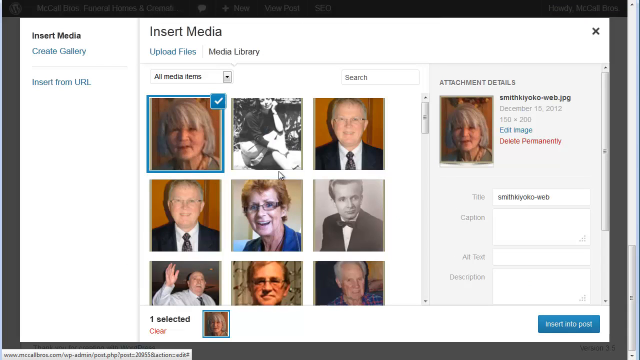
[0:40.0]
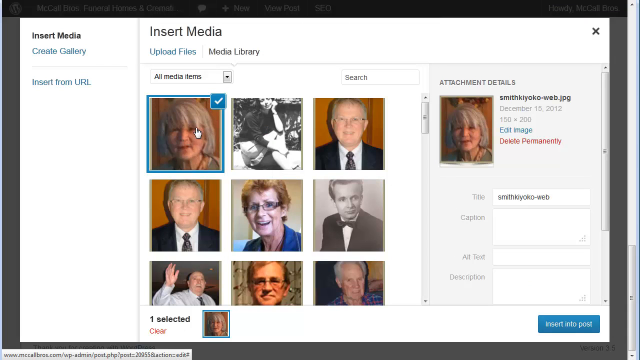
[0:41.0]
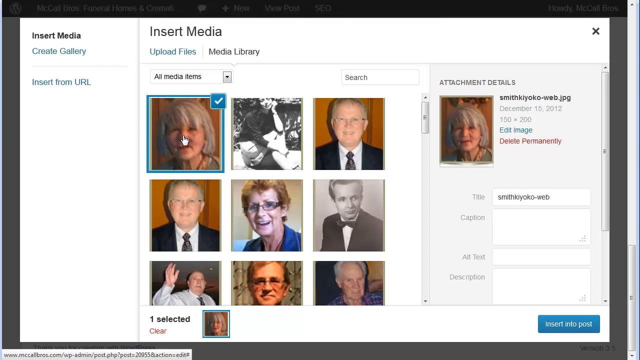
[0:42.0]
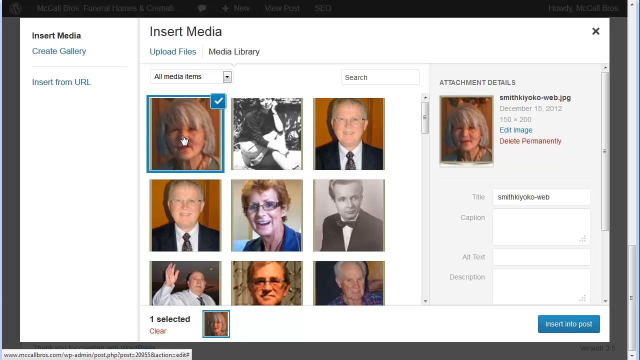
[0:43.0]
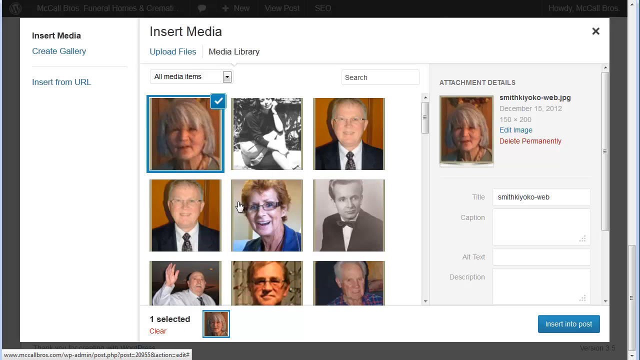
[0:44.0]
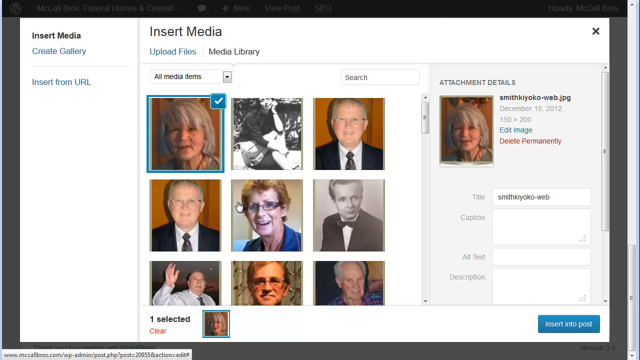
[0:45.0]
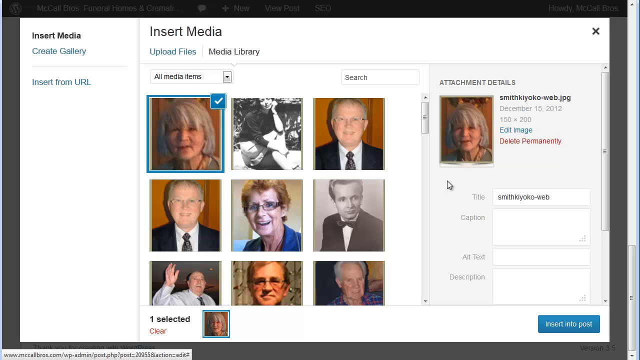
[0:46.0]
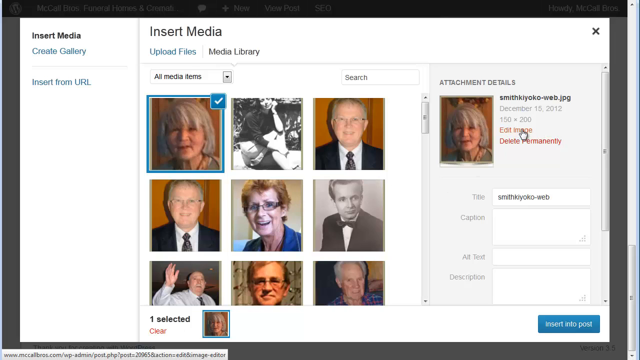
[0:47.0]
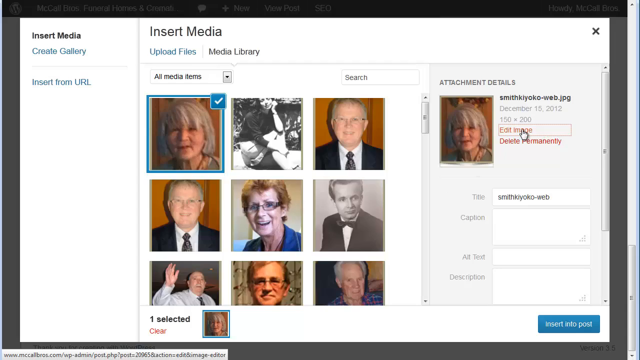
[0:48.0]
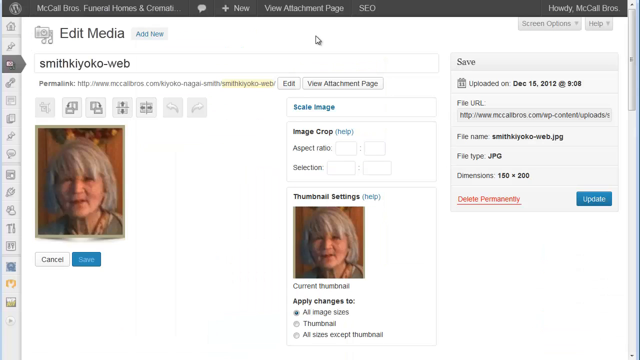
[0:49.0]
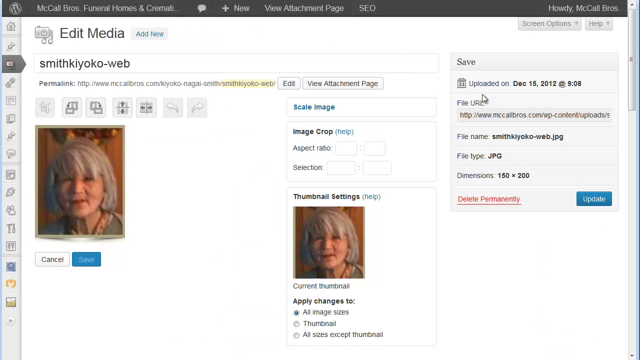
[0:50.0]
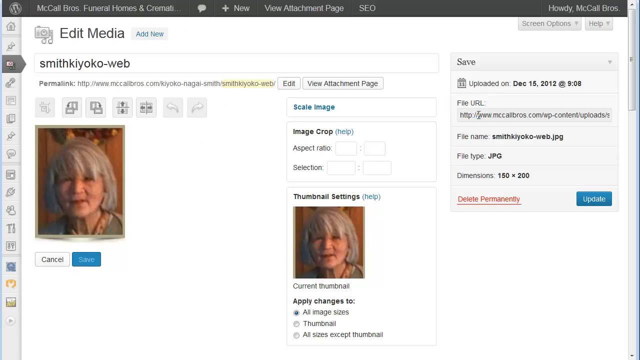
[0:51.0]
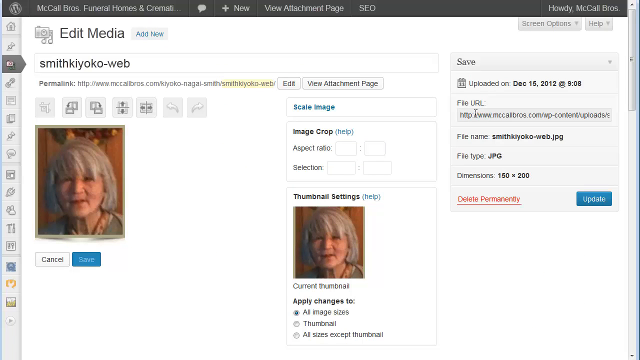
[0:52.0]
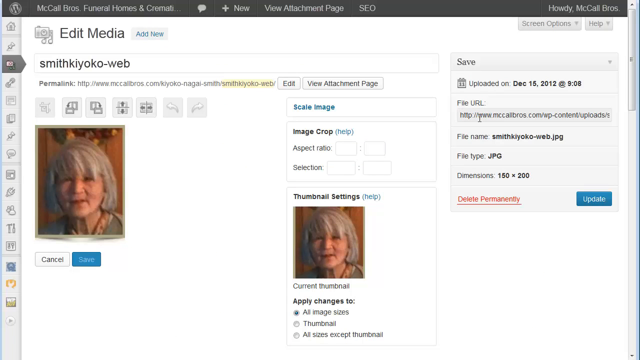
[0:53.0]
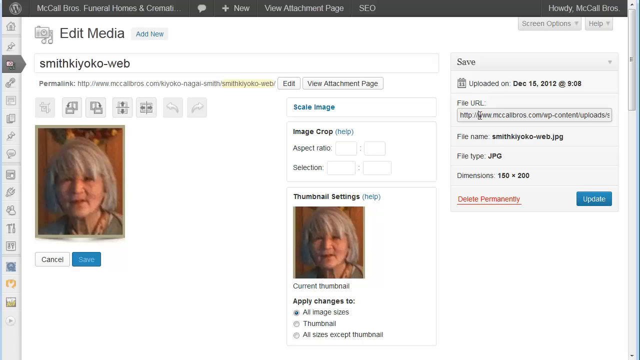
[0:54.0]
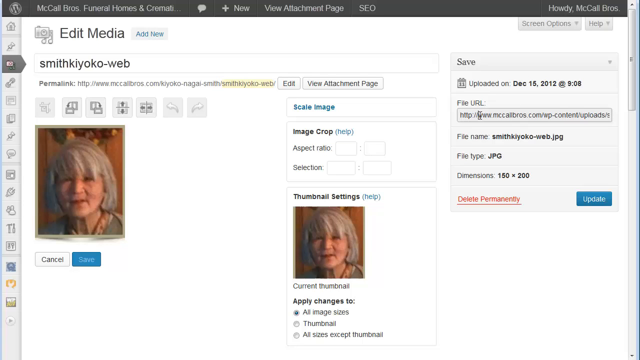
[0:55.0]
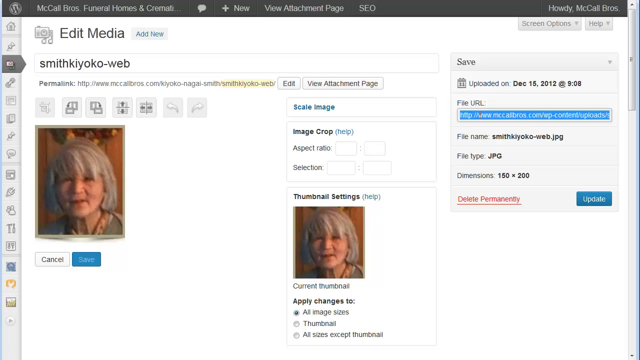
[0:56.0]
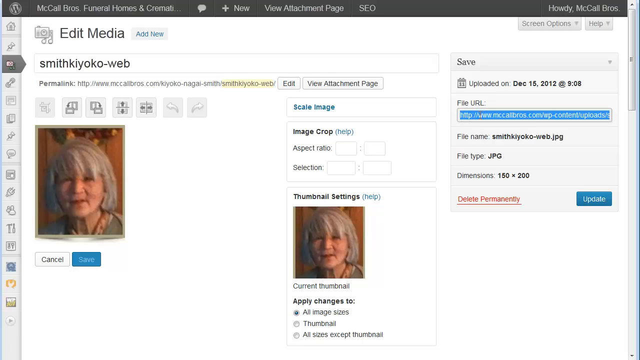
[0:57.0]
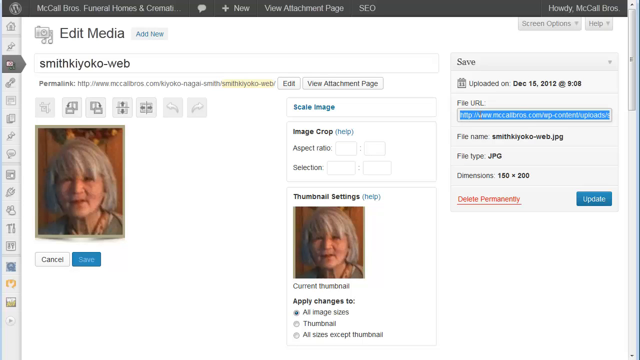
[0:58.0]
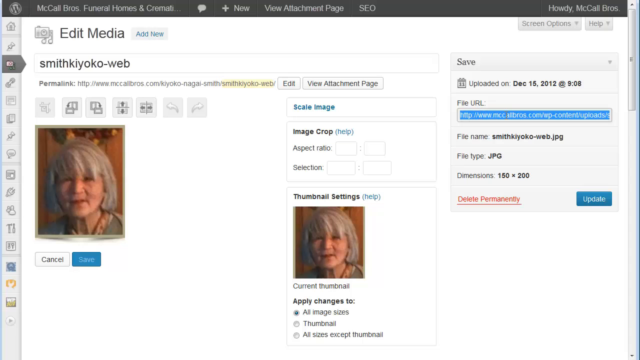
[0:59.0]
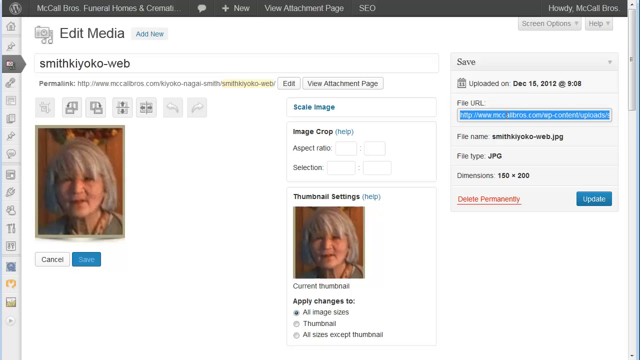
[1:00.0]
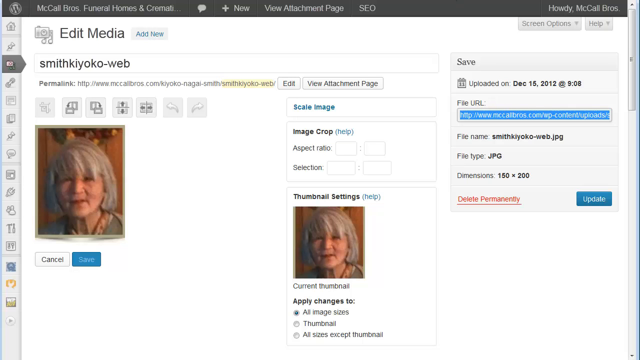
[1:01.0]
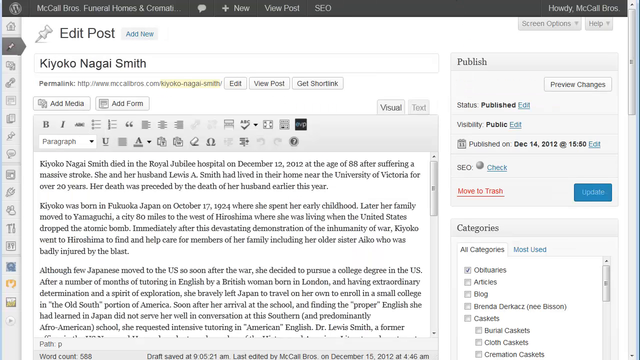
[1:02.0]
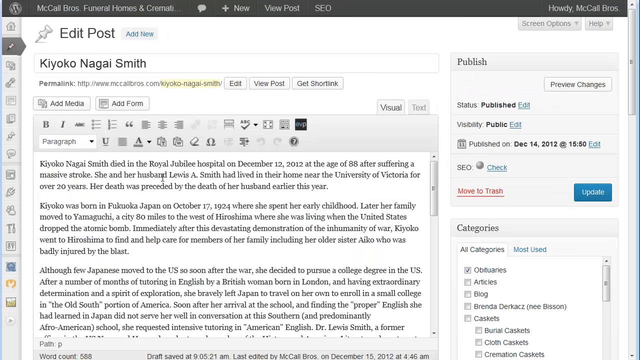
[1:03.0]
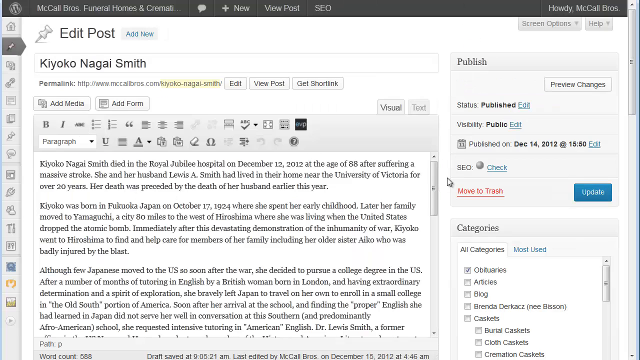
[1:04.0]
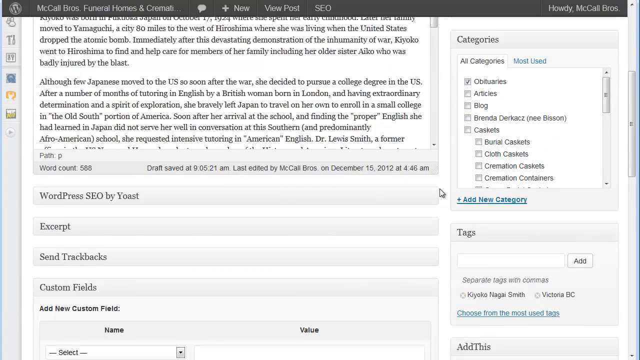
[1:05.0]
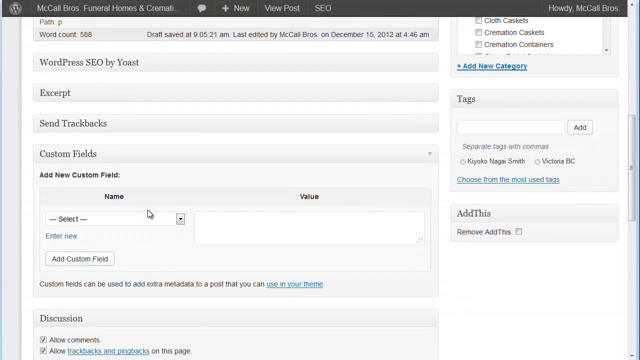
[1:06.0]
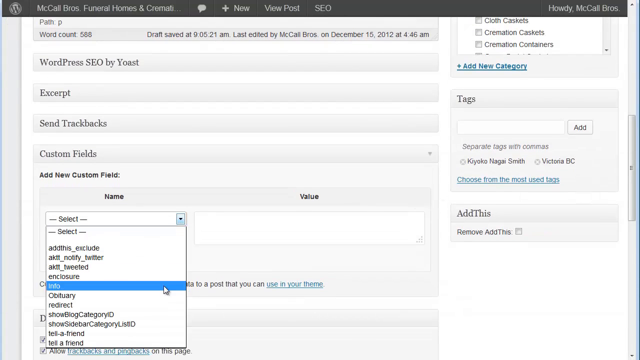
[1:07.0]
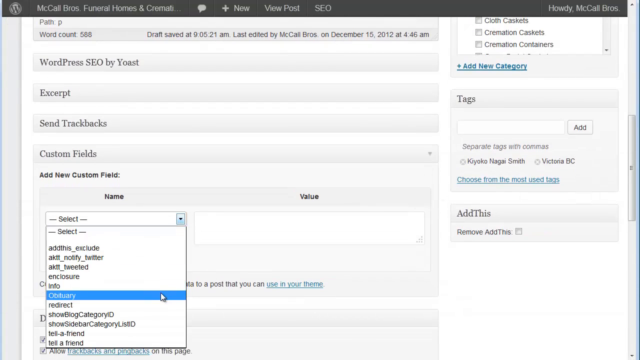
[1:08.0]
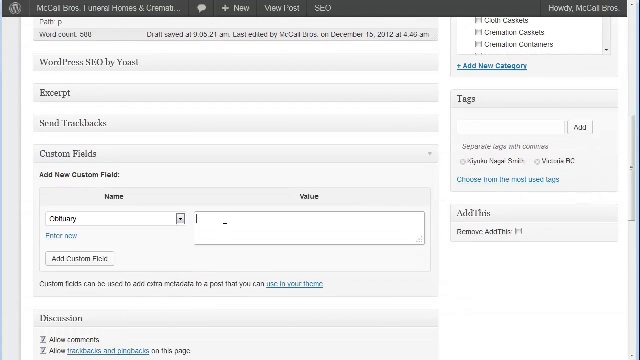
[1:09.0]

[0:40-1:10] WordPress for Funeral Homes is used to add, insert and edit images for an obituary, with an edit image option for a selected picture and a URL link that is copied into the obituary. The obituary has some colors but not many, and a light theme rather than a dark one.